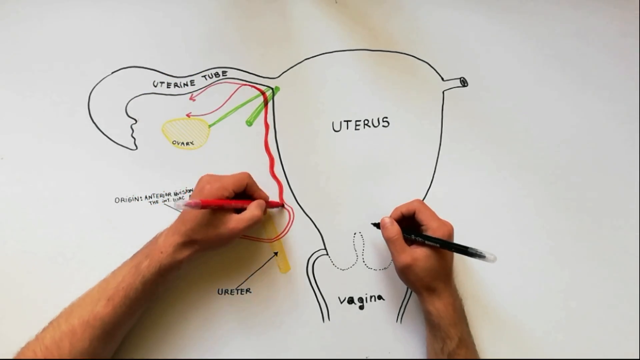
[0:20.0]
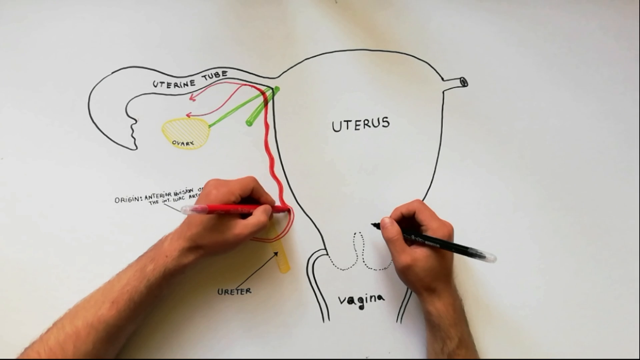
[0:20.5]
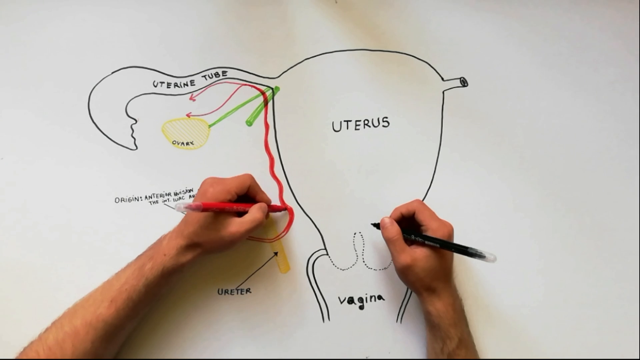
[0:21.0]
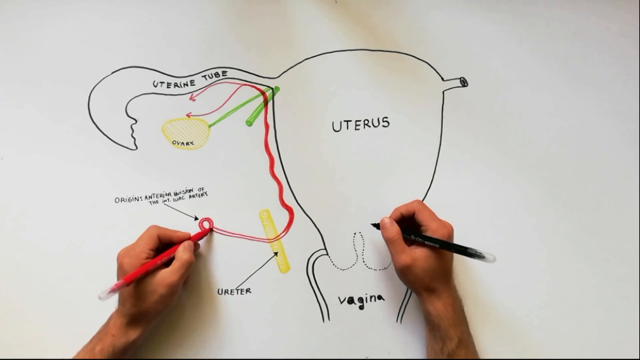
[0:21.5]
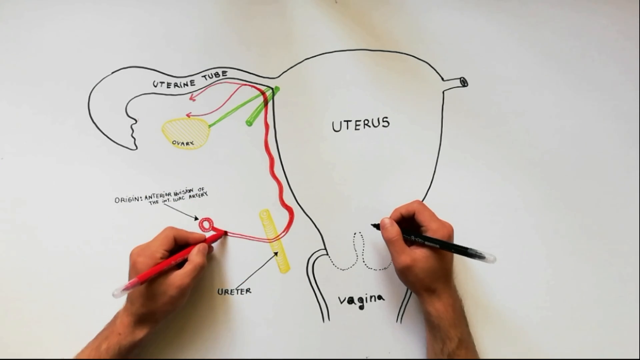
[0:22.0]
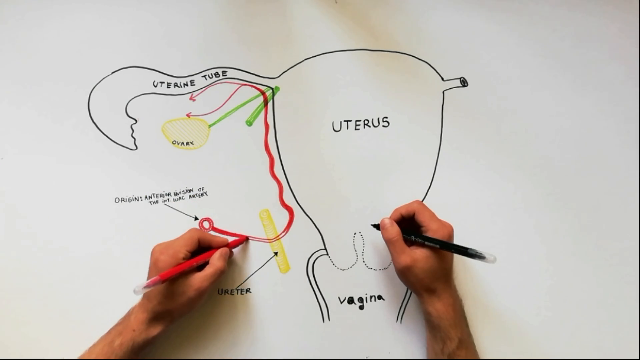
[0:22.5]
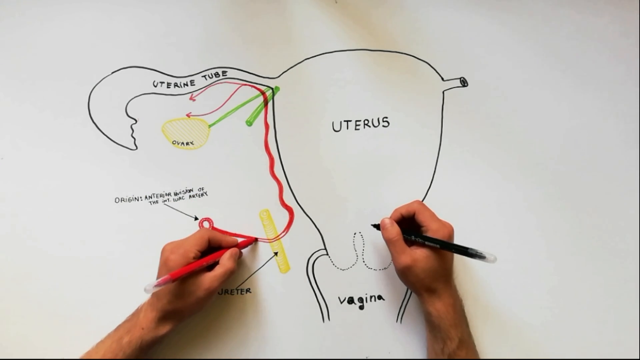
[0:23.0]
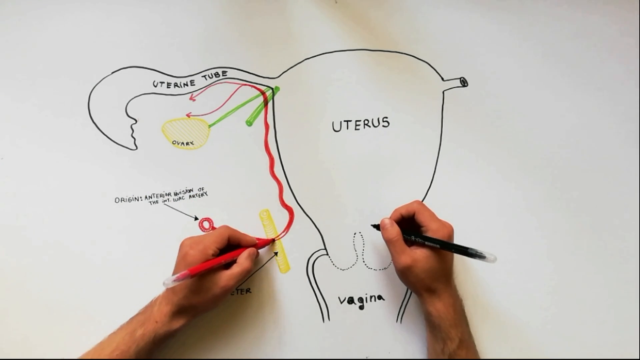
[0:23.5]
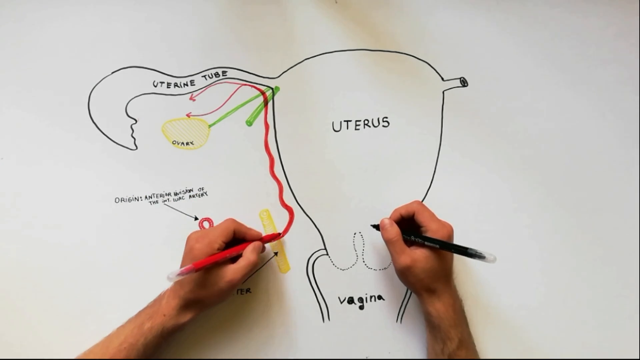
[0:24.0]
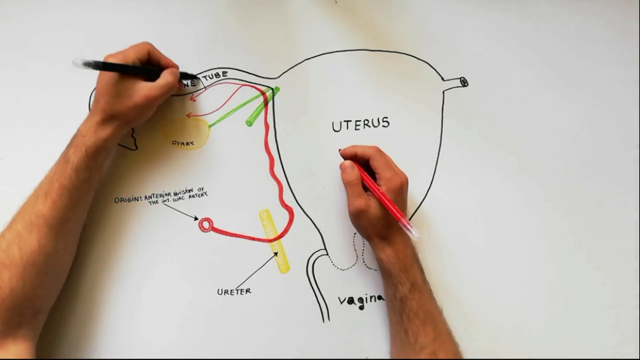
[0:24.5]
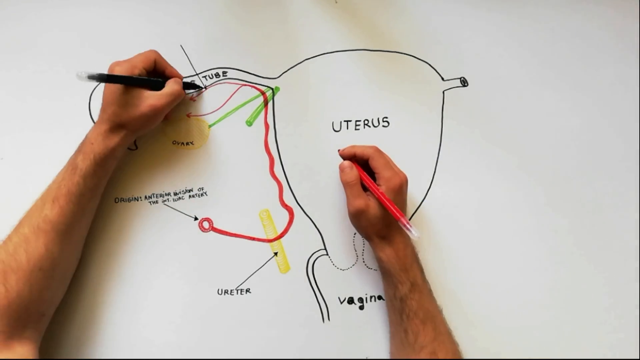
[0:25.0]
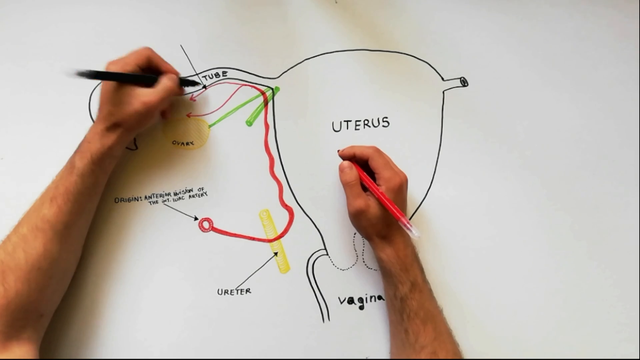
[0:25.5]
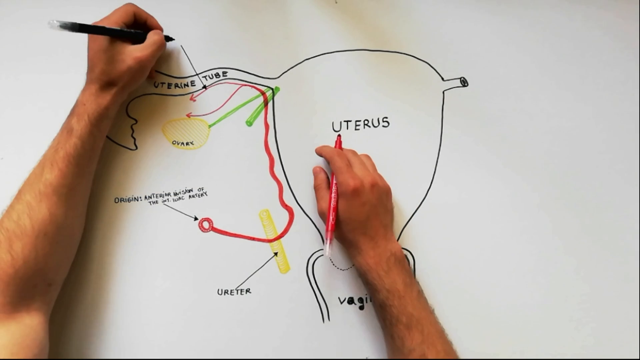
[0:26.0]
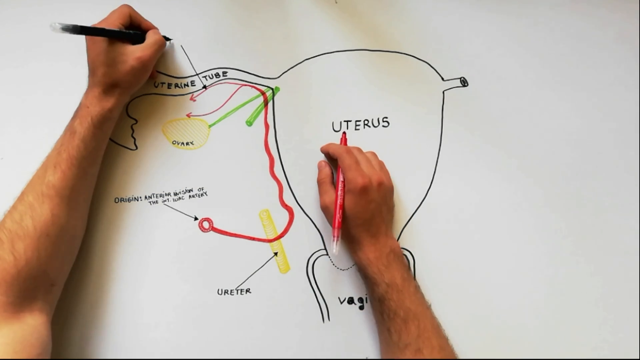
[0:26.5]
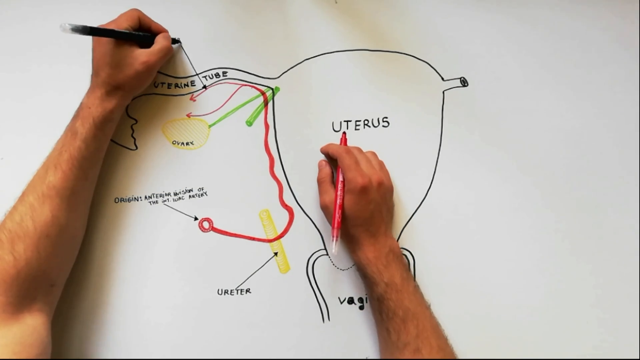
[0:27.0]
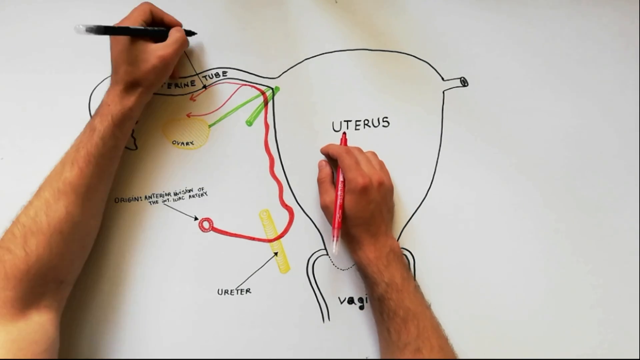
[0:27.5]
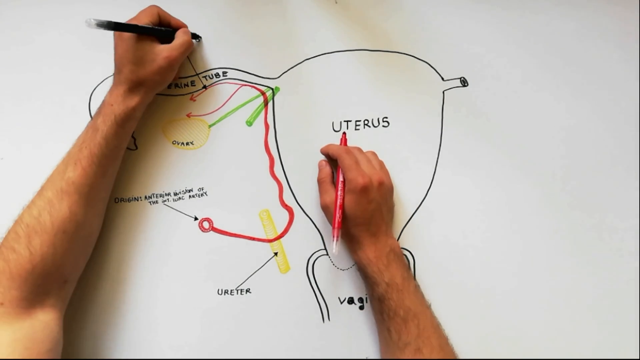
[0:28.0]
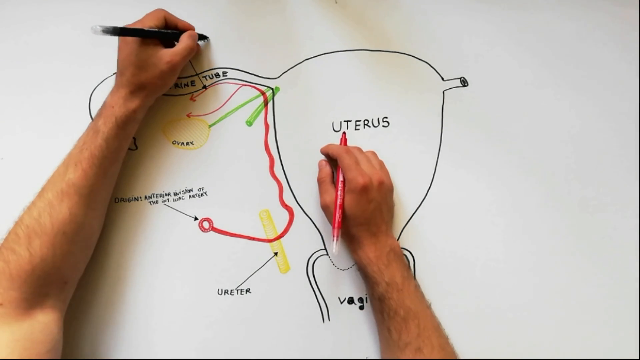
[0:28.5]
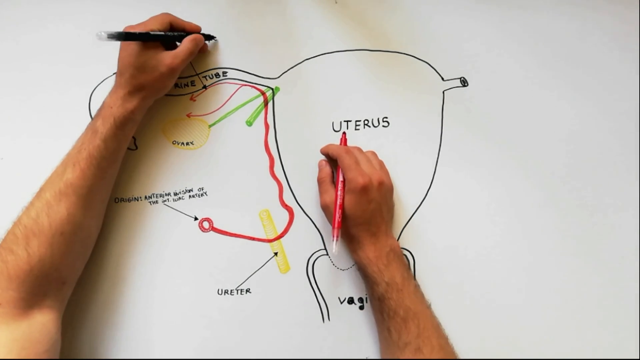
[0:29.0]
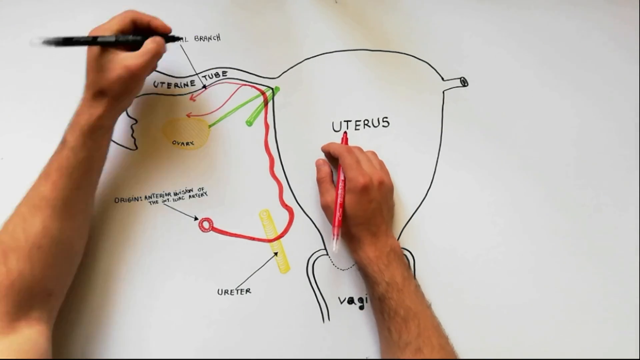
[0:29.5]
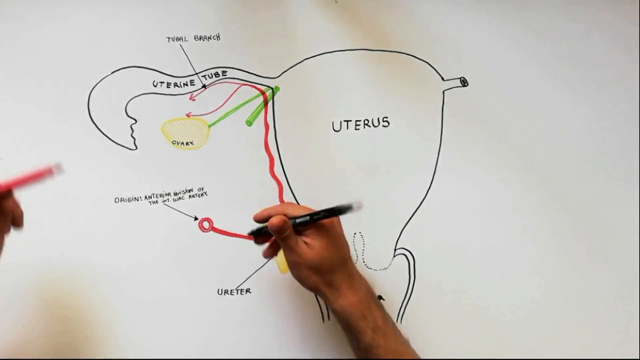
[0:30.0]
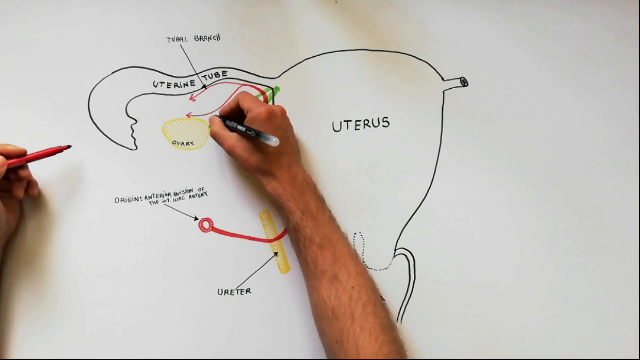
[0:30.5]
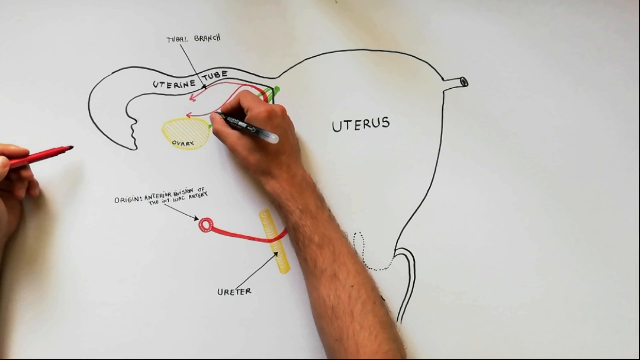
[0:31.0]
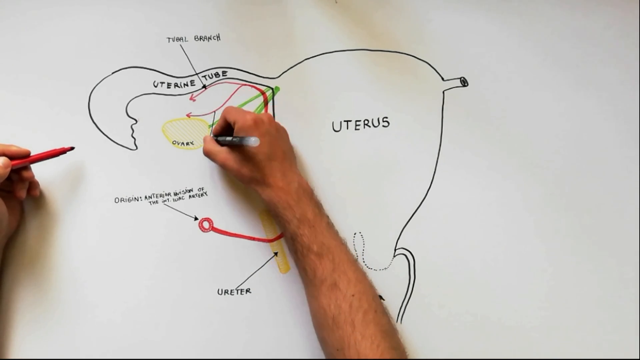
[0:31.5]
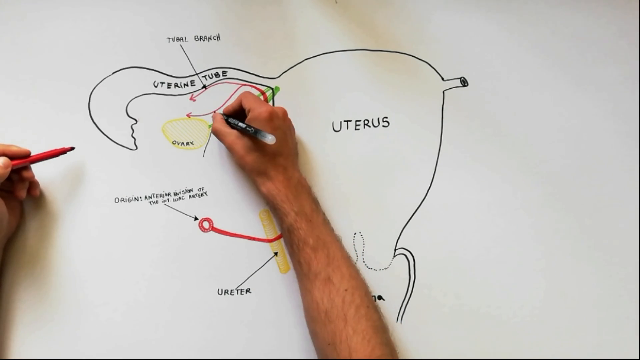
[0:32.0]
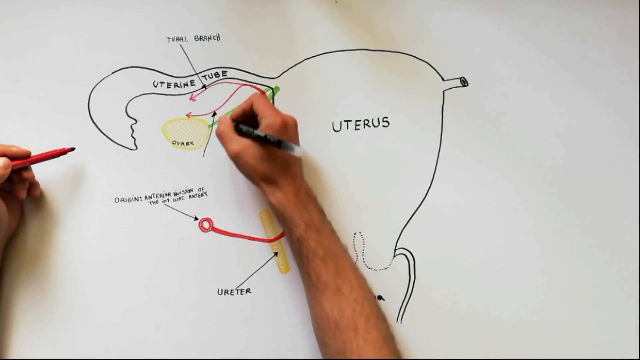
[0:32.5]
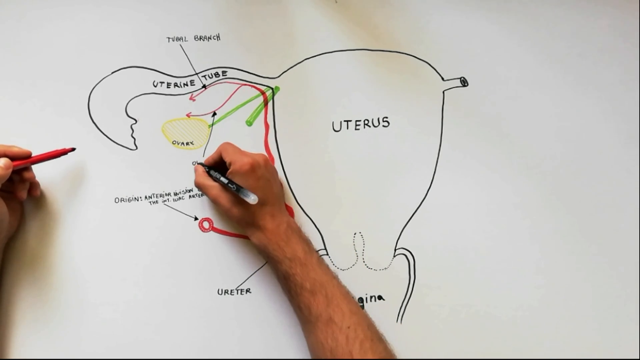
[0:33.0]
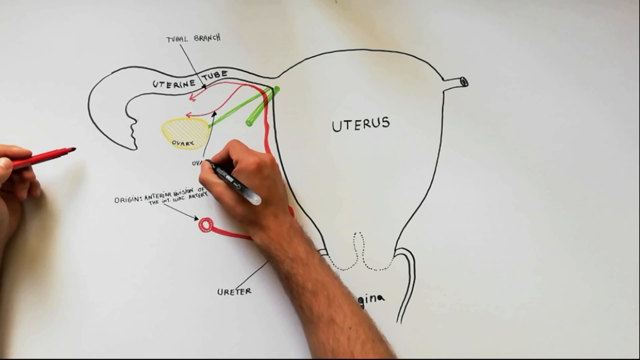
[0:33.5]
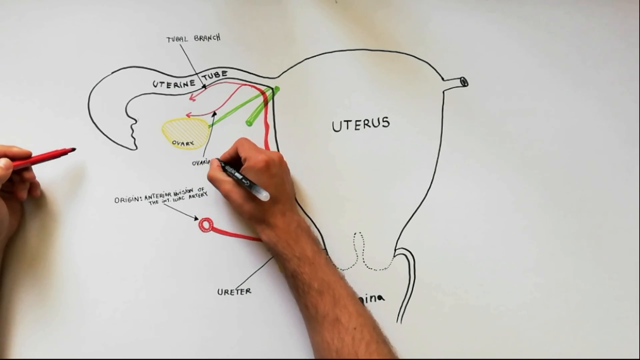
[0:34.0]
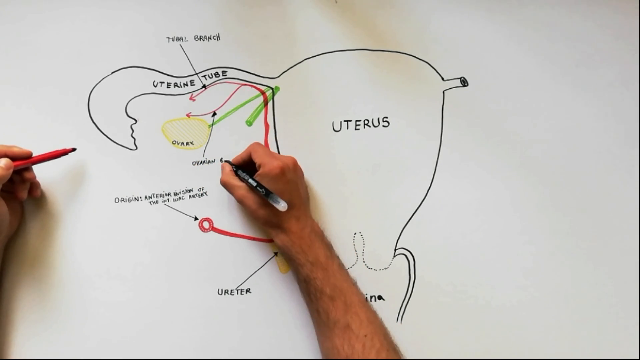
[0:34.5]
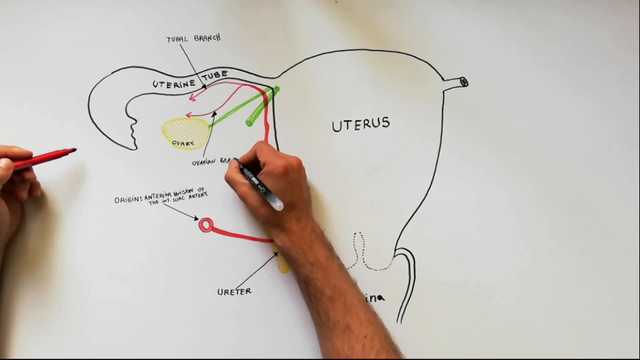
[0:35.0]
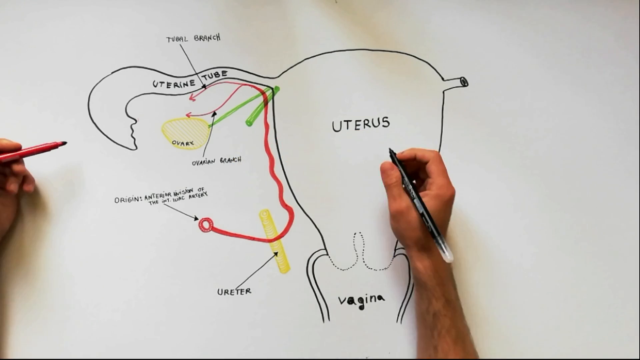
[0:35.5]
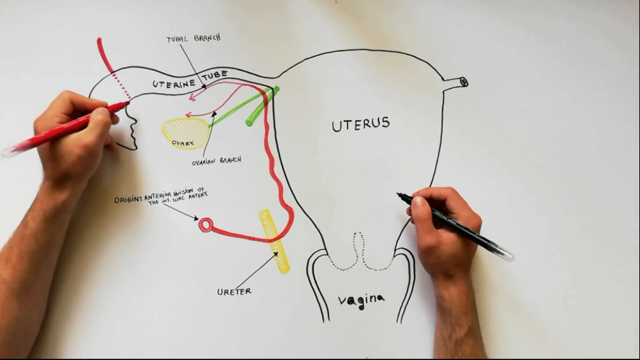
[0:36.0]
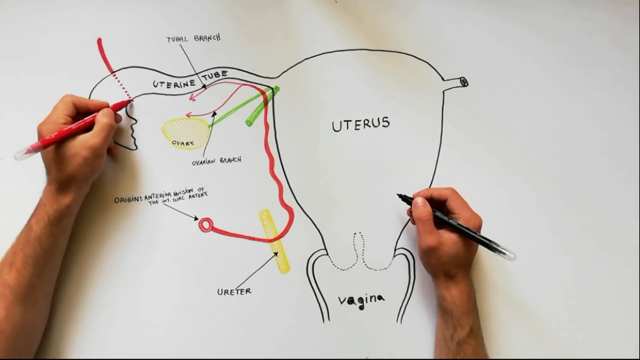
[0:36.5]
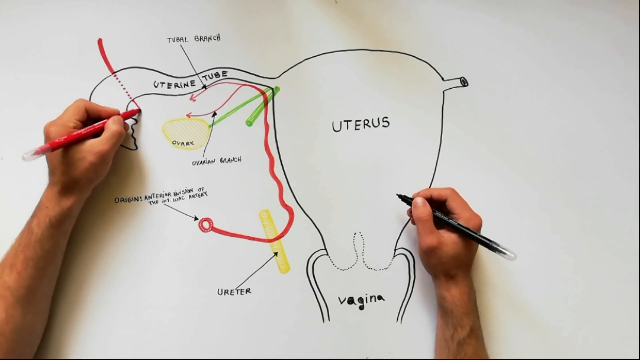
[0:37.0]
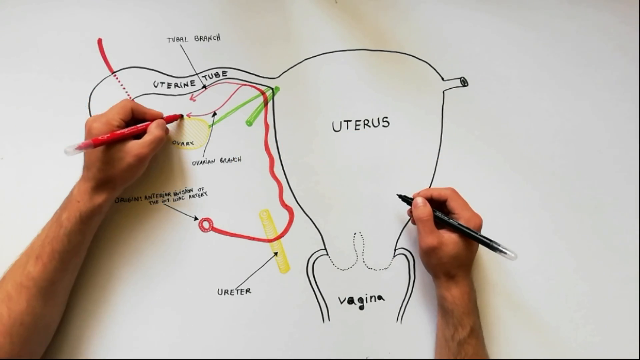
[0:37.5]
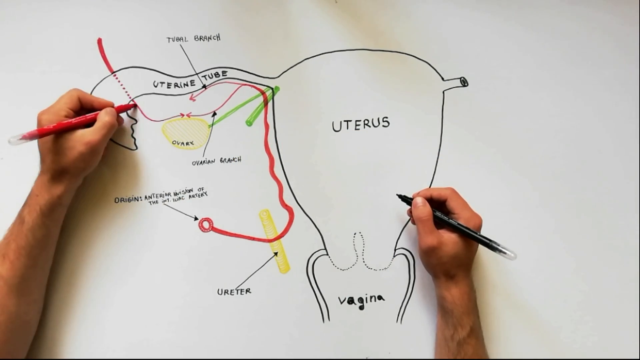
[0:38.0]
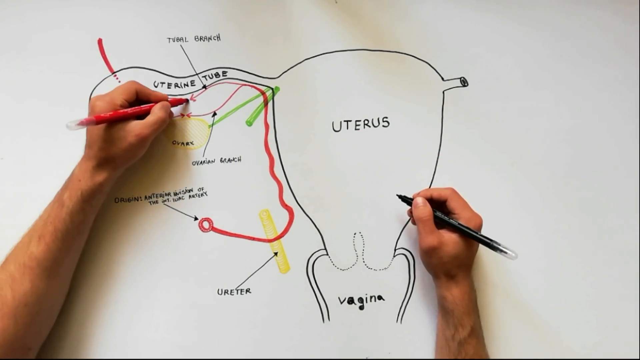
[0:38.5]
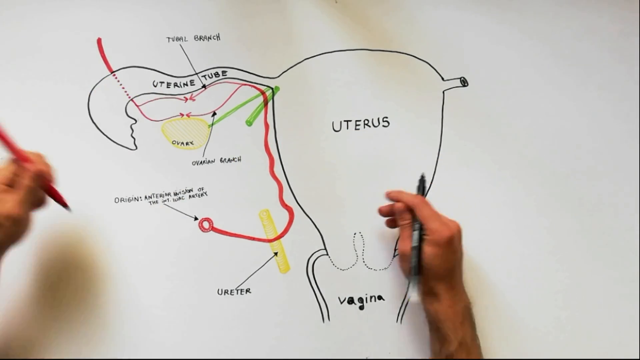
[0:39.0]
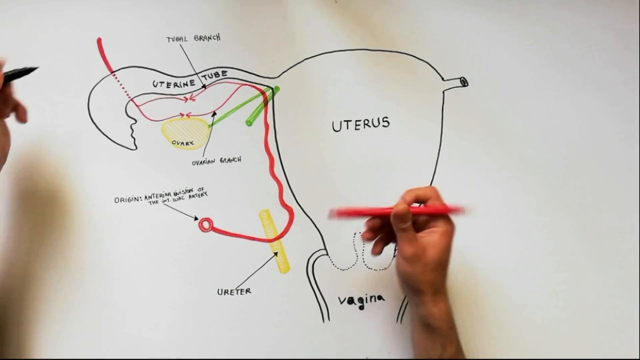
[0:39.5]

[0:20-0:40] Two arms rest on a white tabletop. The right hand holds a black marker and the left hand holds a red marker. Drawn on the white sheet is an oval shape with the word "uterus" inside it. A small tube is drawn off the left side of it, and inside it says "uterine tube". Underneath the oval, two small tubes come off the left and right sides, with the word "vagina" between them. To the left of that is a small yellow tube, with the word "ureter" written in black underneath it and a black arrow going from that word to the small yellow tube. The man's left hand is coloring in a red tube that goes up alongside the left of the uterus.